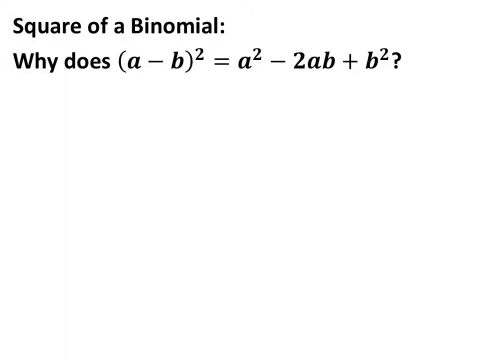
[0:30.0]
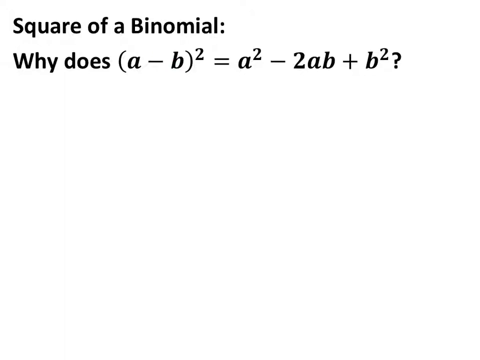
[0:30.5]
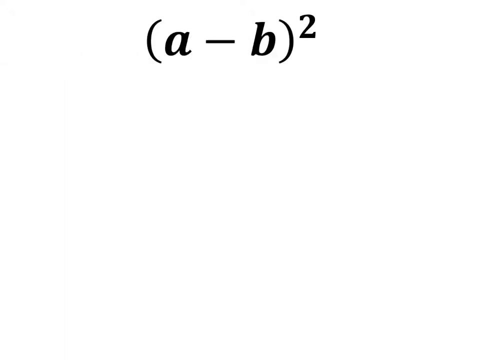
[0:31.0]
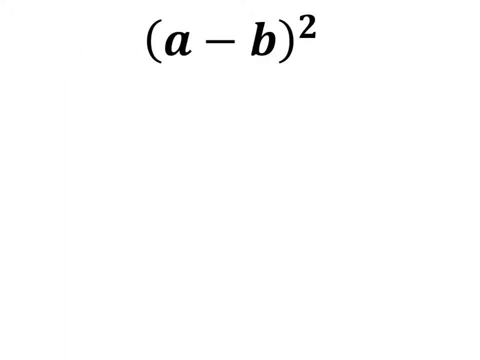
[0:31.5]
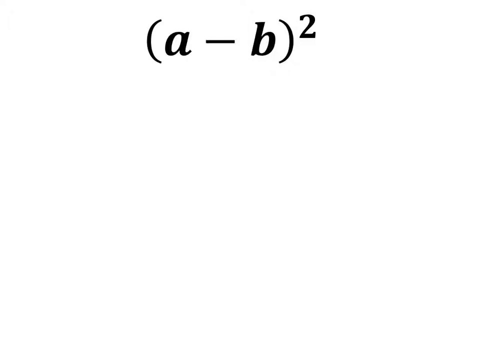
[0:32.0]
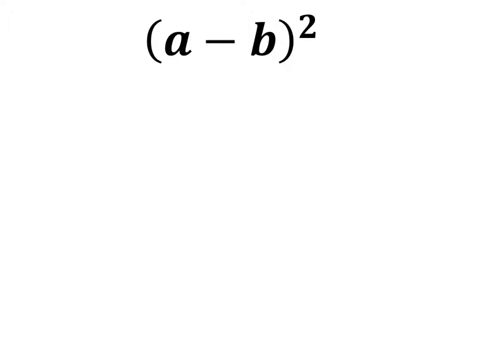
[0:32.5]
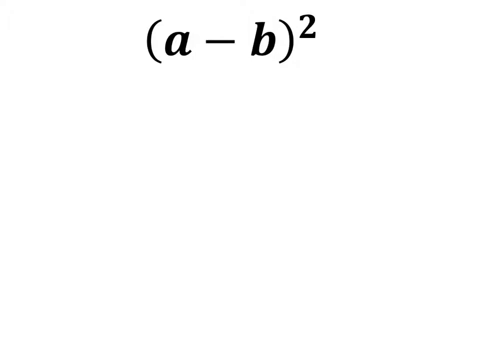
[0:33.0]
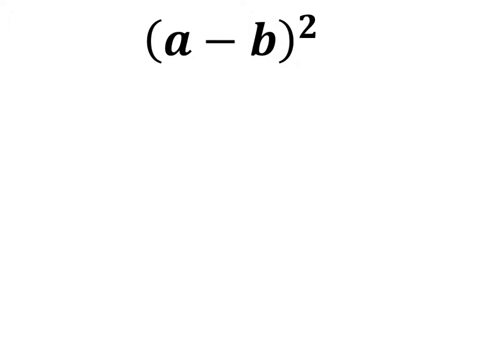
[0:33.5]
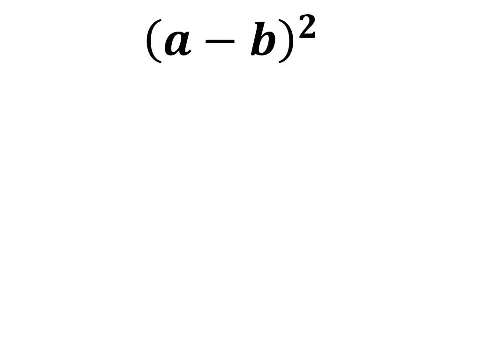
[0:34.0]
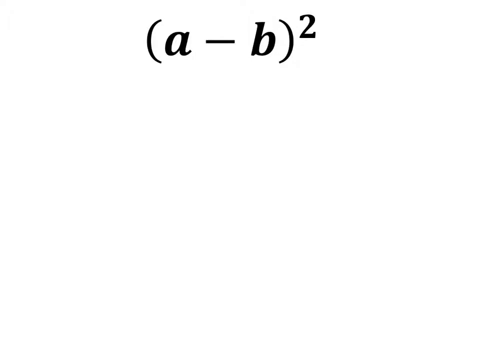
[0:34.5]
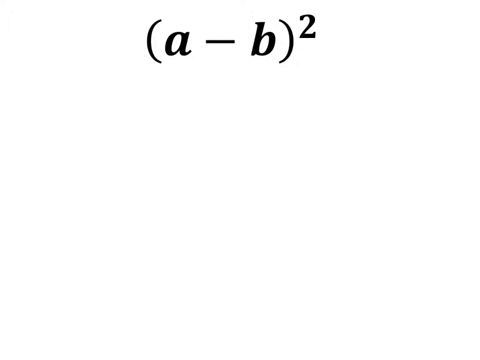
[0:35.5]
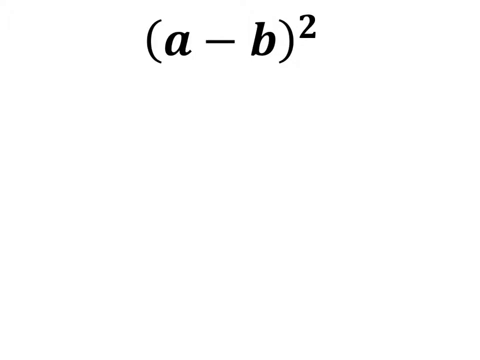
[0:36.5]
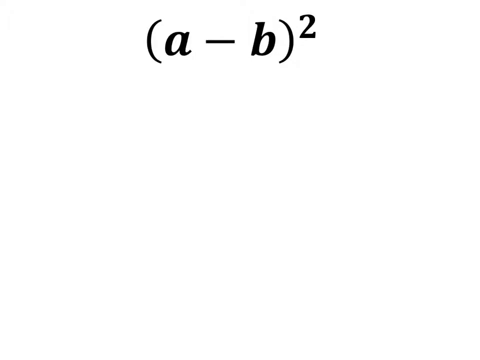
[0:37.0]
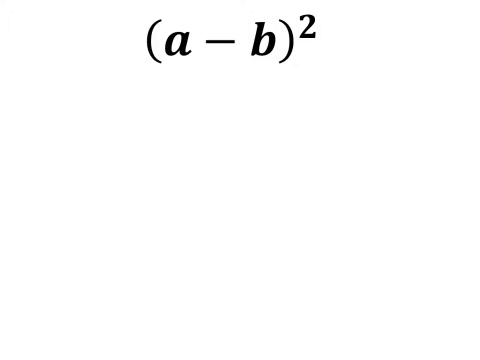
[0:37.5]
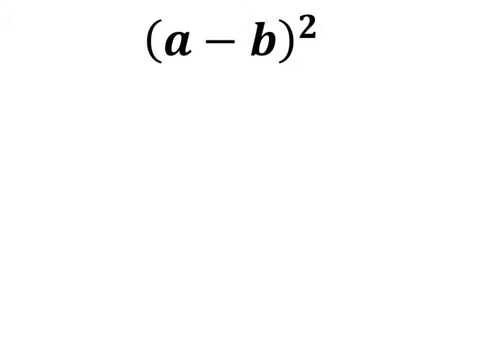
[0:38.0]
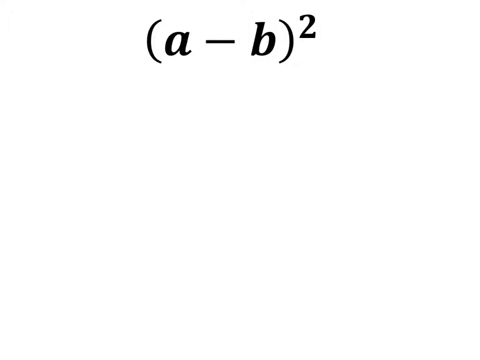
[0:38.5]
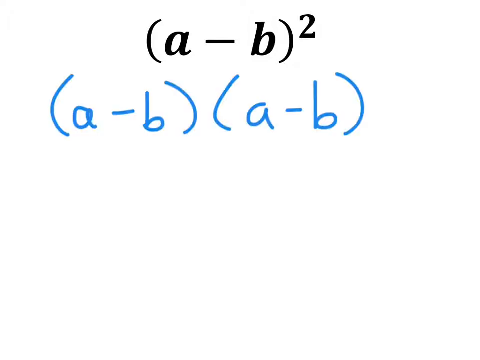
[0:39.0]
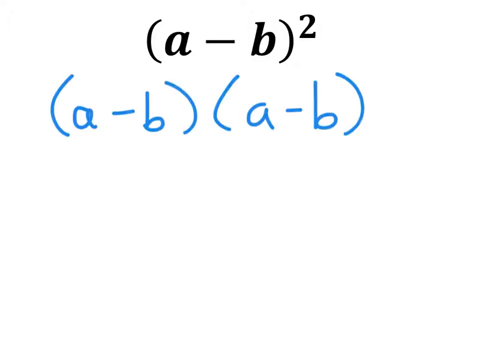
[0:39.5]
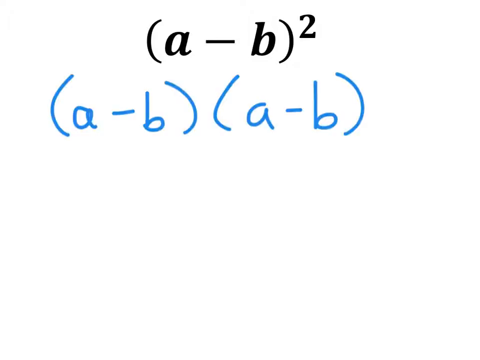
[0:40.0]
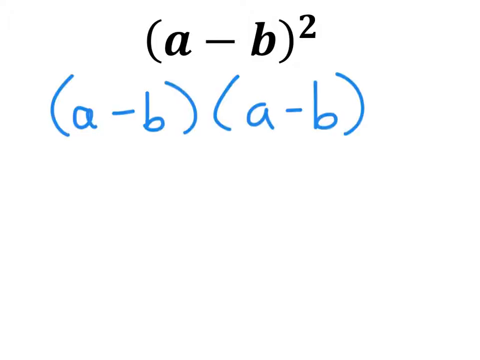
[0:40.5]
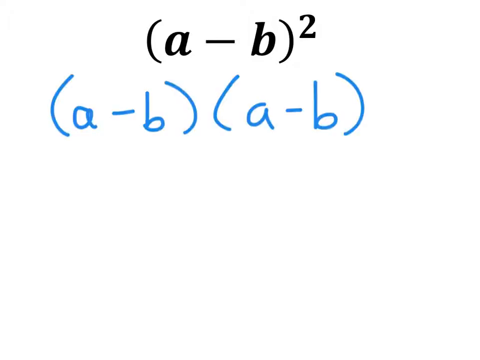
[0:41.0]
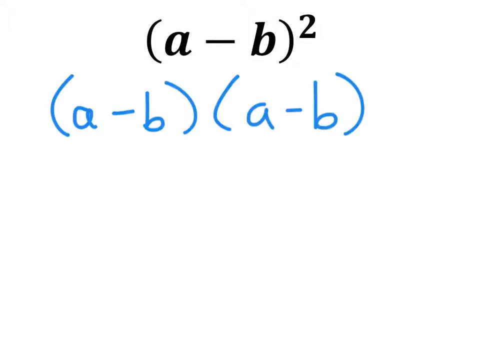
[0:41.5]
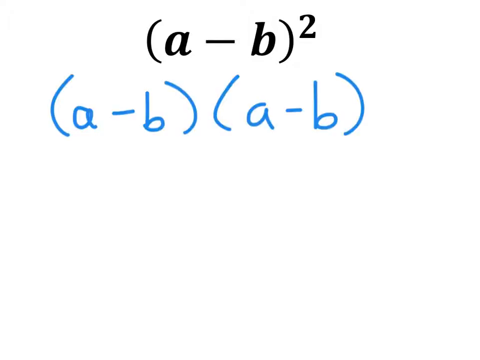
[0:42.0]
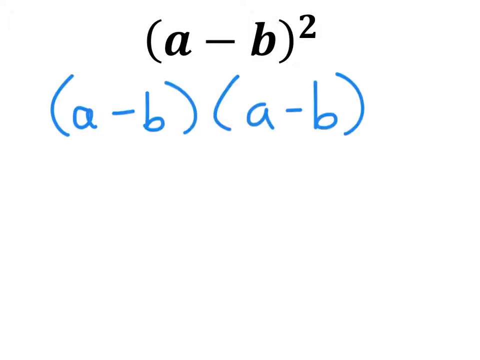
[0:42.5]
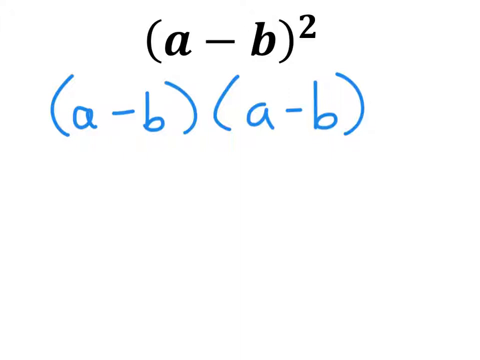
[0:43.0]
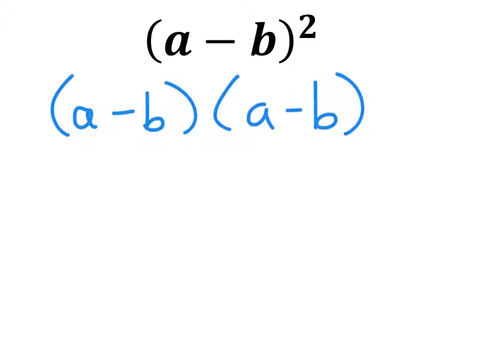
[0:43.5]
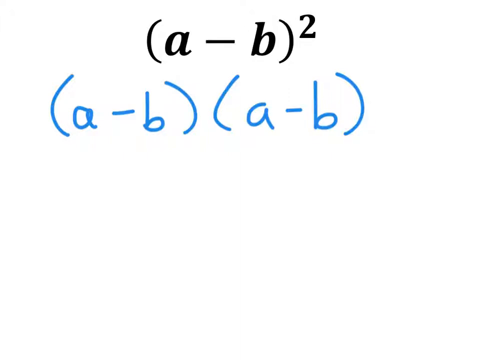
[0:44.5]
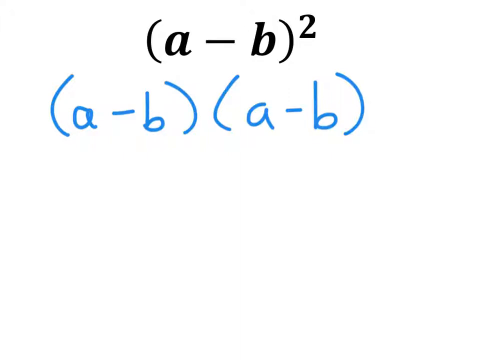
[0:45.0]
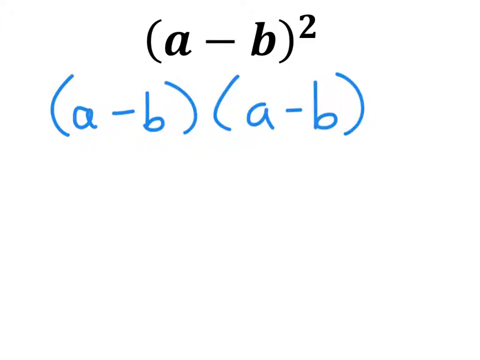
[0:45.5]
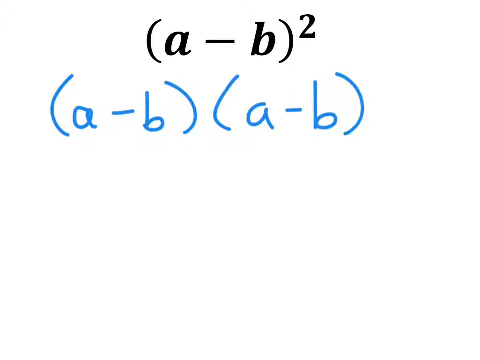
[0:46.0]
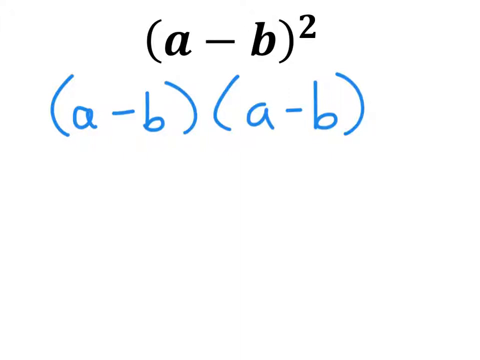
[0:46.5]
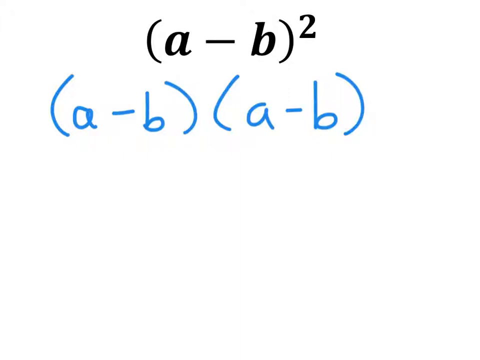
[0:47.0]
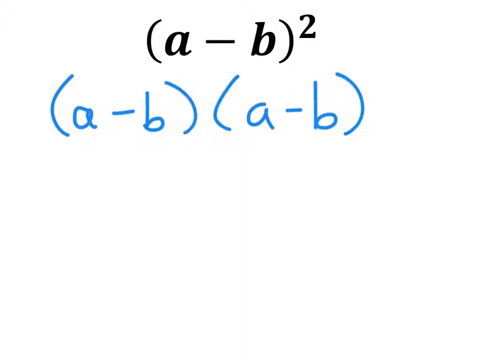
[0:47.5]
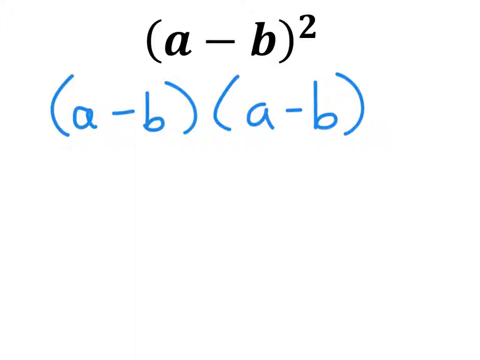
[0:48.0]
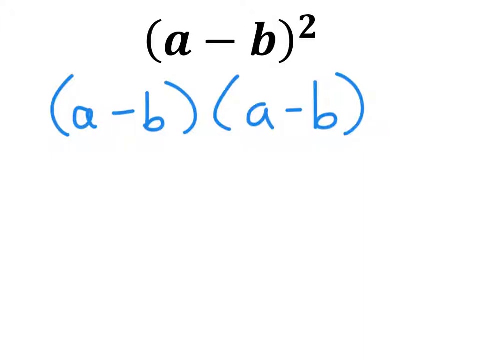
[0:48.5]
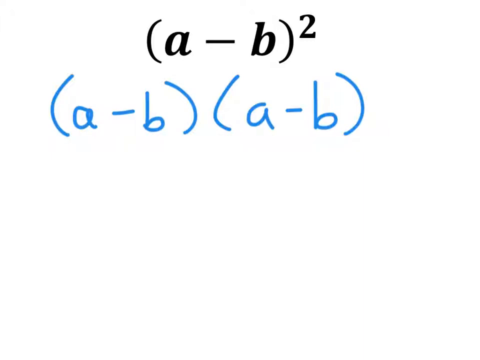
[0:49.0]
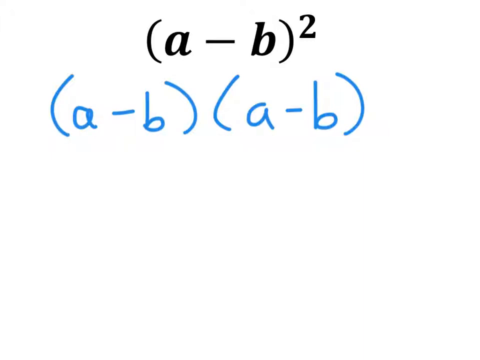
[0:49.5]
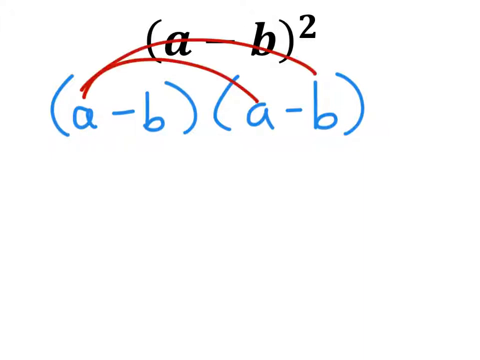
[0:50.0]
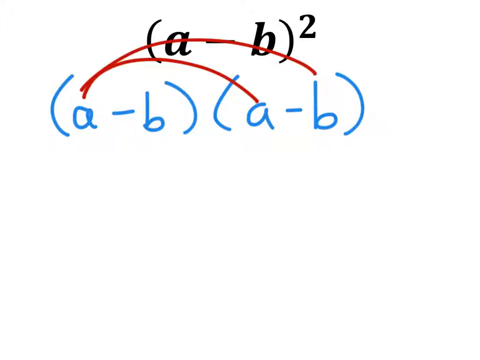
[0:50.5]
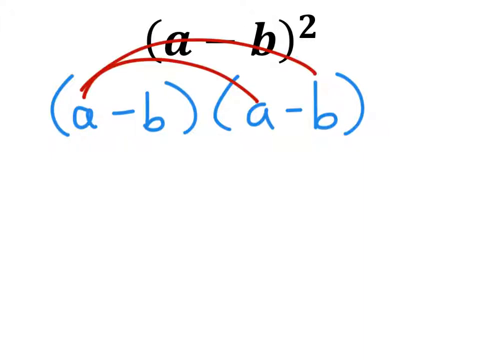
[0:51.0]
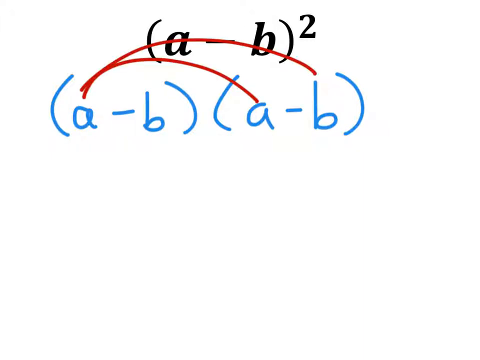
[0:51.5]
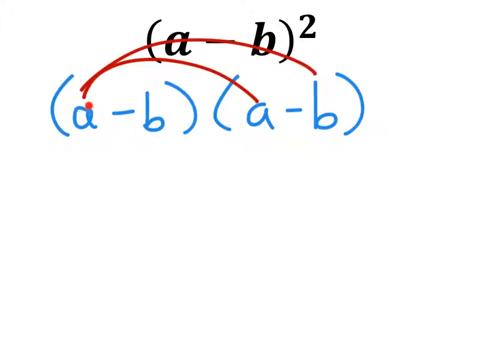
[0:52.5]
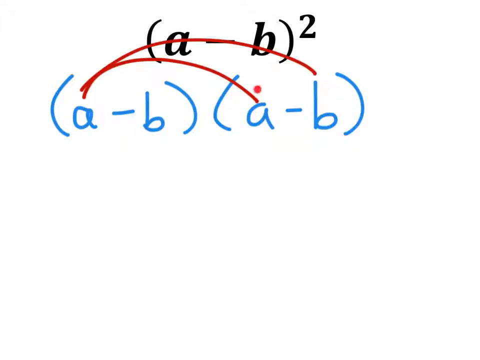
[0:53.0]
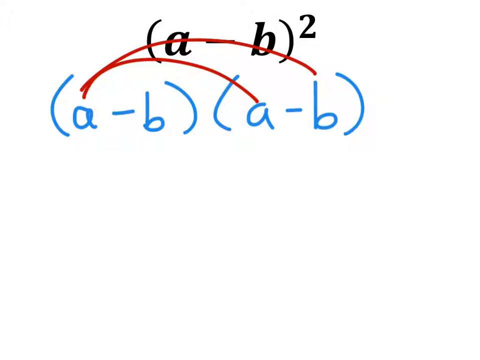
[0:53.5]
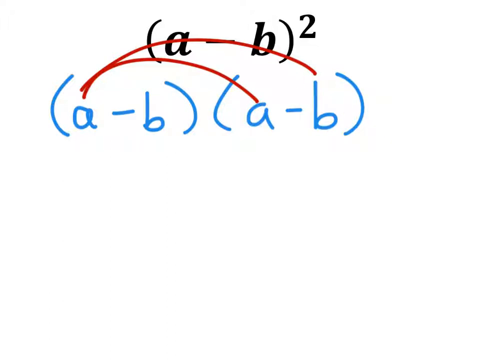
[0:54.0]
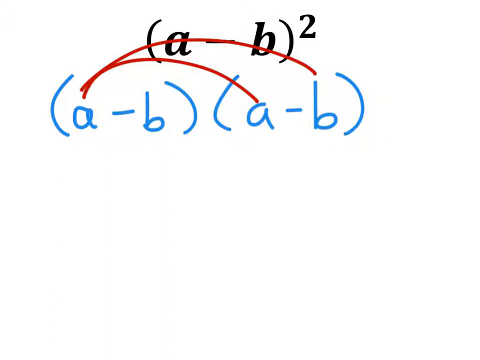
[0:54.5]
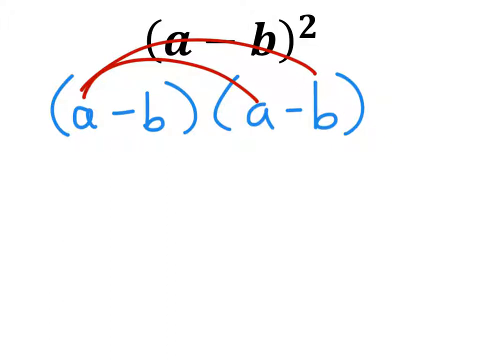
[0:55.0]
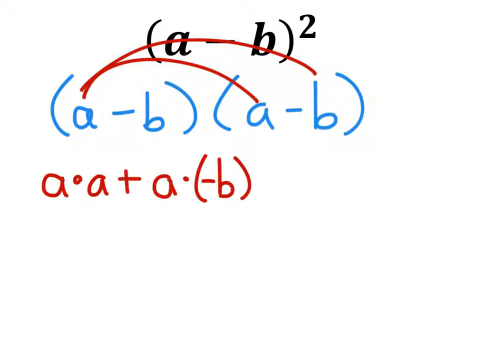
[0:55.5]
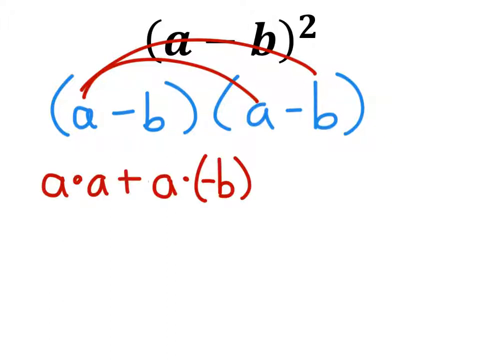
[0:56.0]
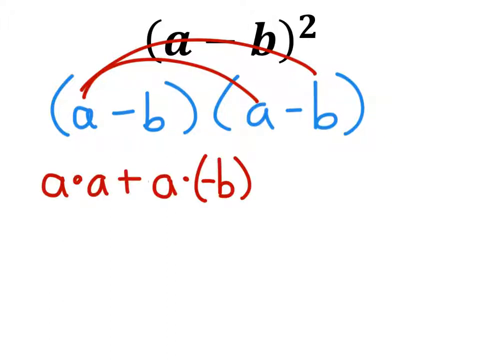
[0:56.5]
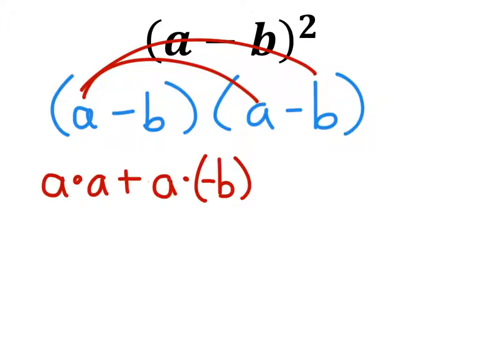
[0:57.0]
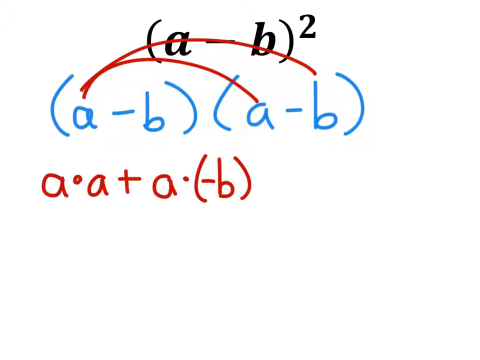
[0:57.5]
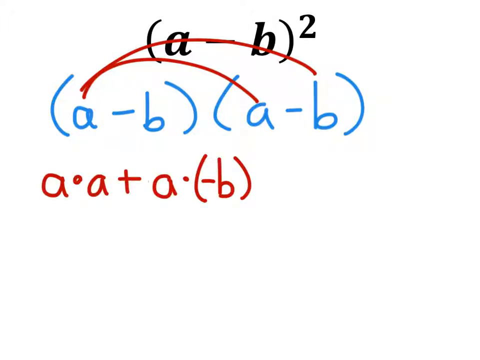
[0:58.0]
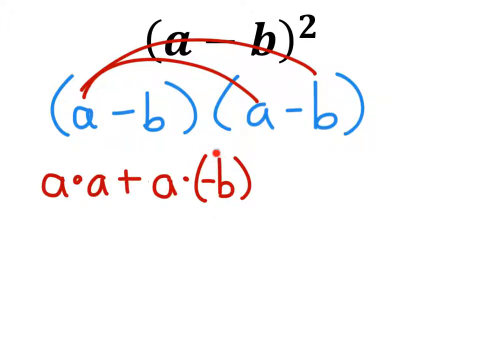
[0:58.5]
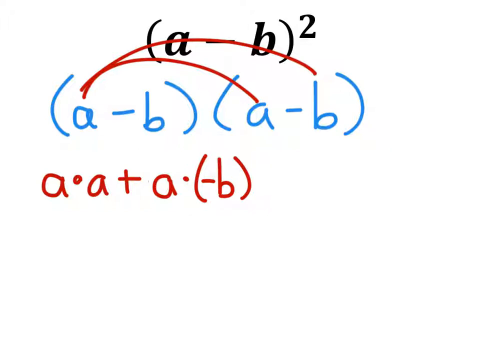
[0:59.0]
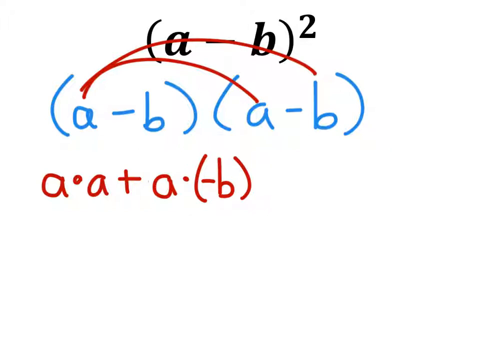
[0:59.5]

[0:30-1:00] Black text on a white background reads "square of a binomial", followed by the question "Why does (A − B)² = A² − 2AB + B²?" Under it there is nothing but white space. The video then moves to the next page, which shows (A − B)² with white space beneath it. Below that, (A − B)(A − B) appears in blue rather than black. The teacher draws two red lines, one going to A and the next going from A to B. Under this, written in red, is A × A + A × (−B).